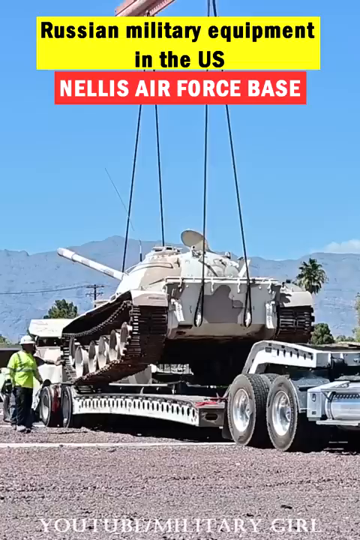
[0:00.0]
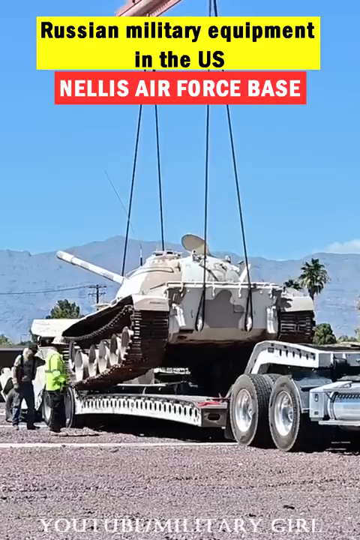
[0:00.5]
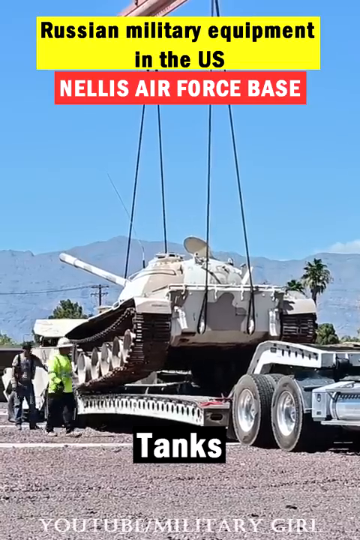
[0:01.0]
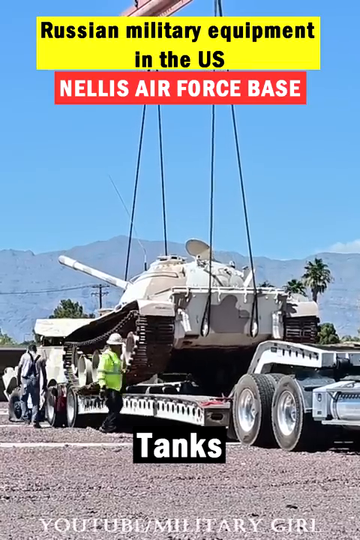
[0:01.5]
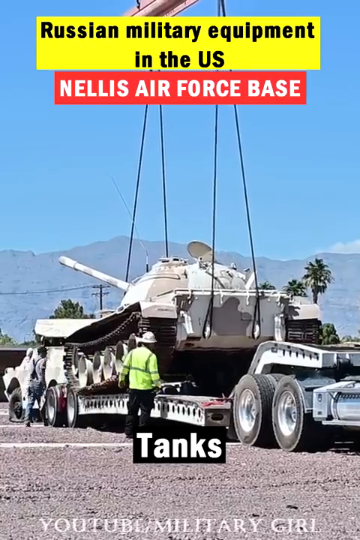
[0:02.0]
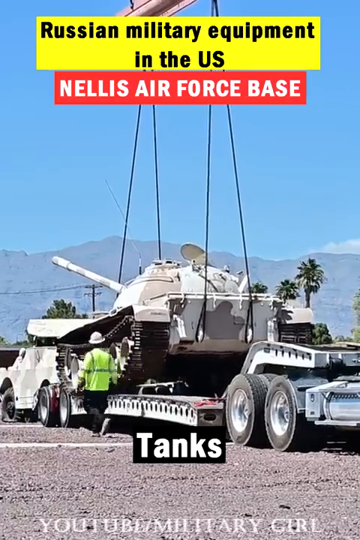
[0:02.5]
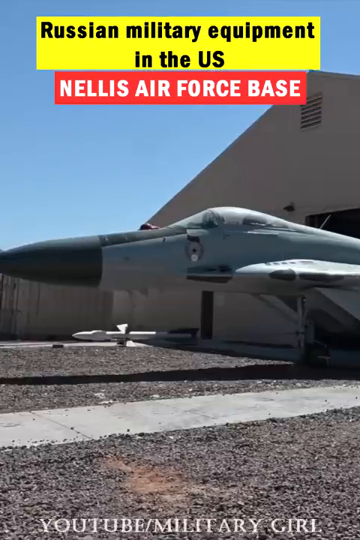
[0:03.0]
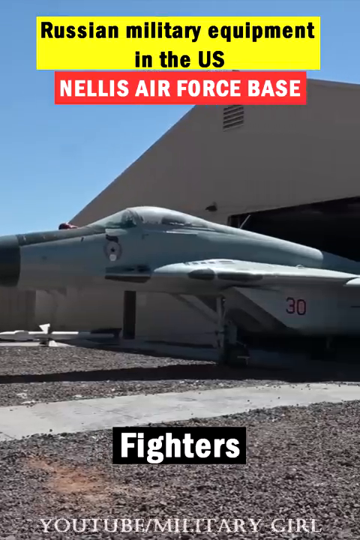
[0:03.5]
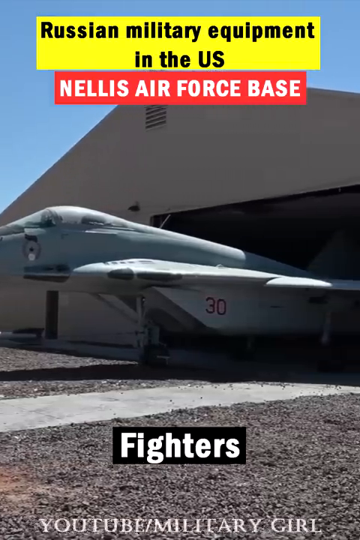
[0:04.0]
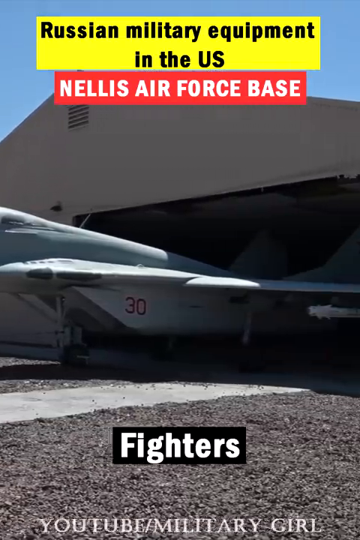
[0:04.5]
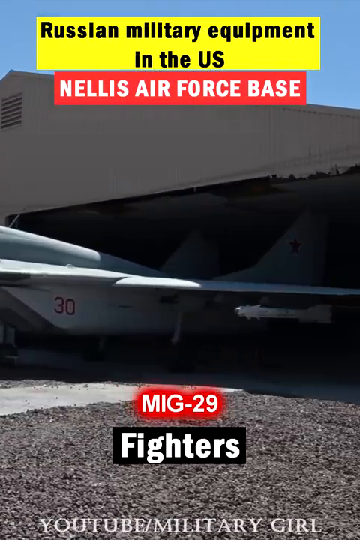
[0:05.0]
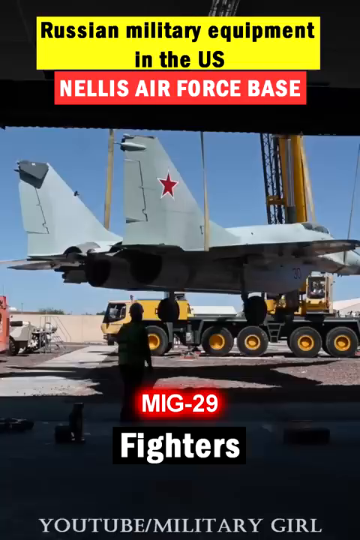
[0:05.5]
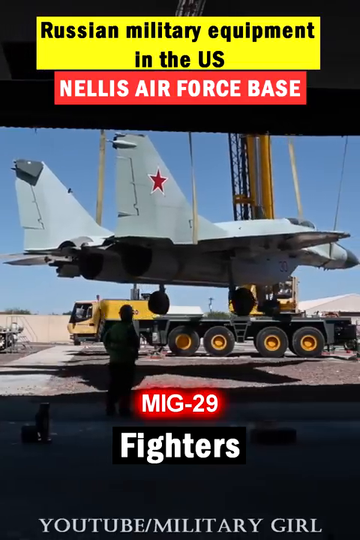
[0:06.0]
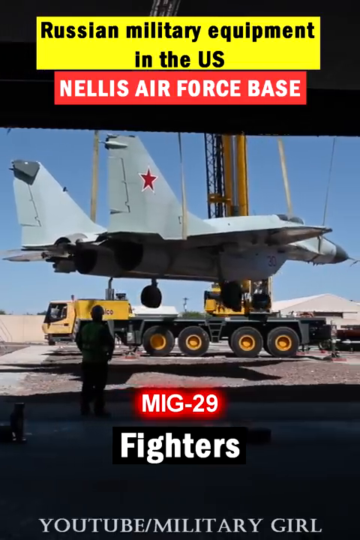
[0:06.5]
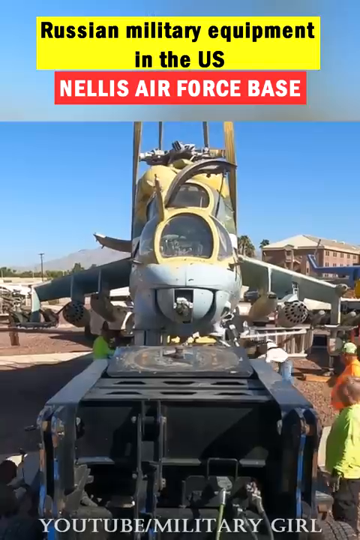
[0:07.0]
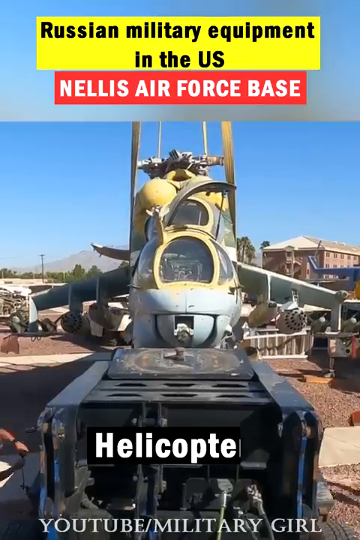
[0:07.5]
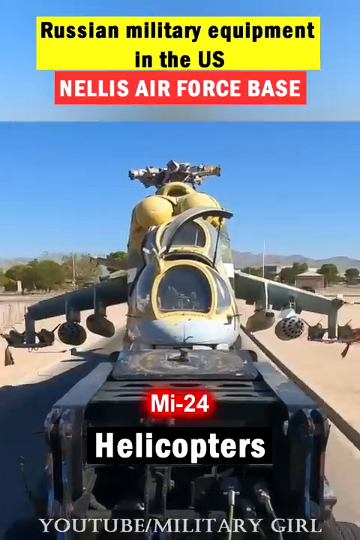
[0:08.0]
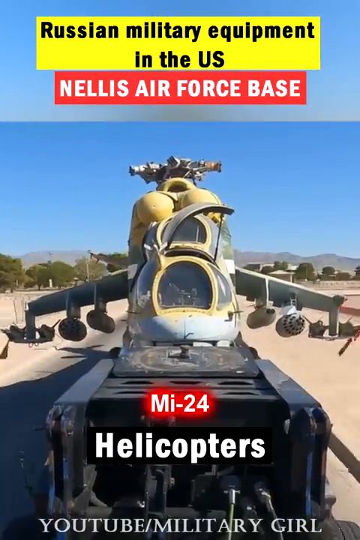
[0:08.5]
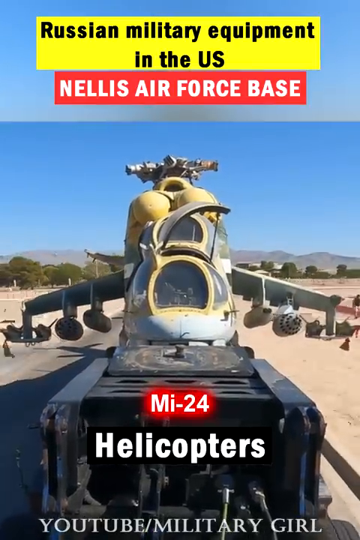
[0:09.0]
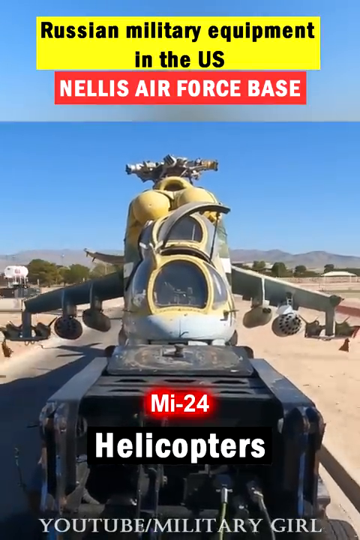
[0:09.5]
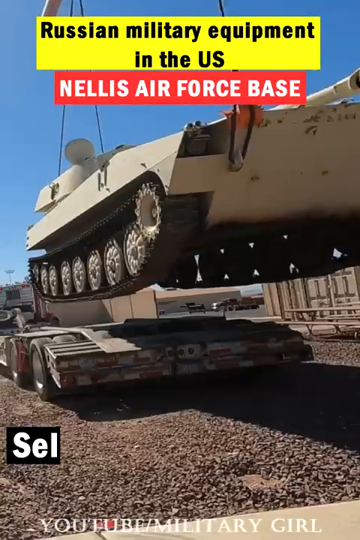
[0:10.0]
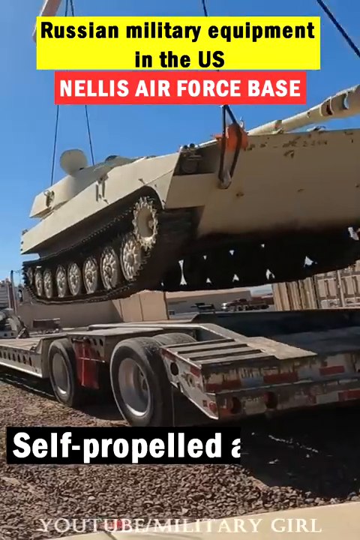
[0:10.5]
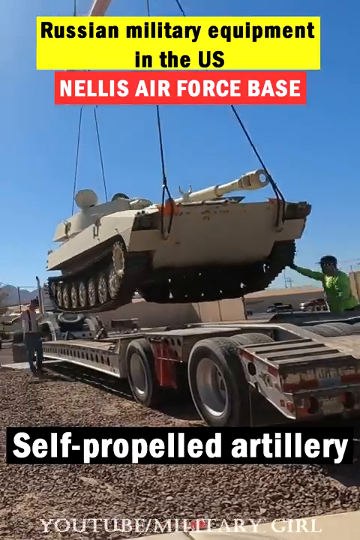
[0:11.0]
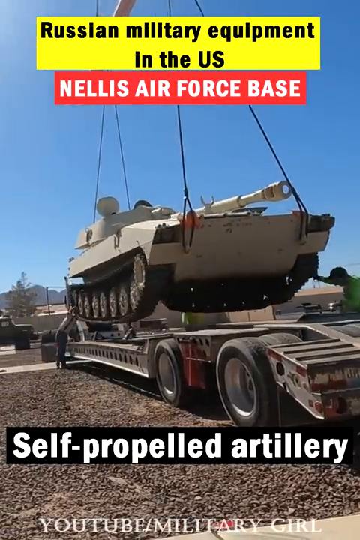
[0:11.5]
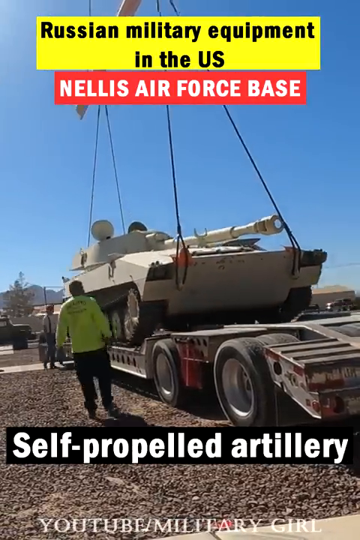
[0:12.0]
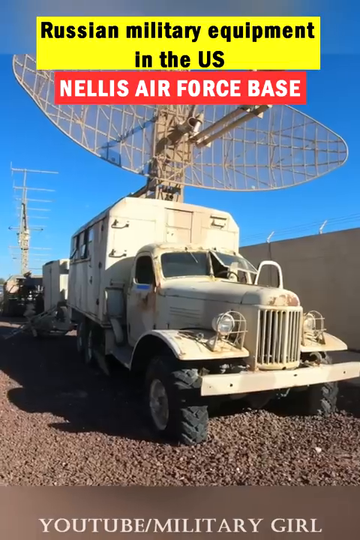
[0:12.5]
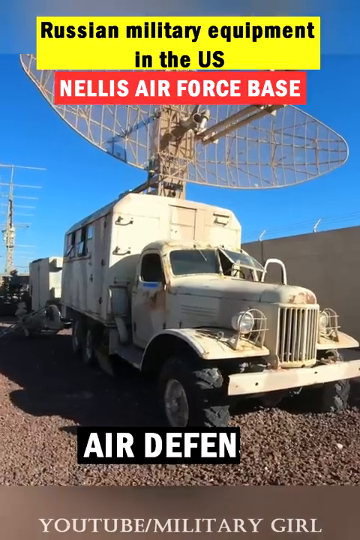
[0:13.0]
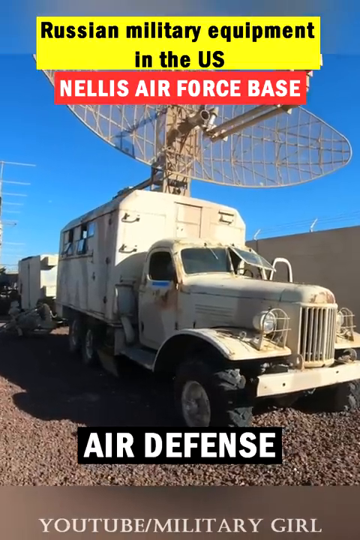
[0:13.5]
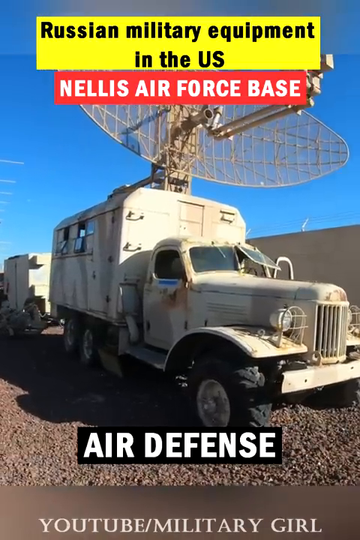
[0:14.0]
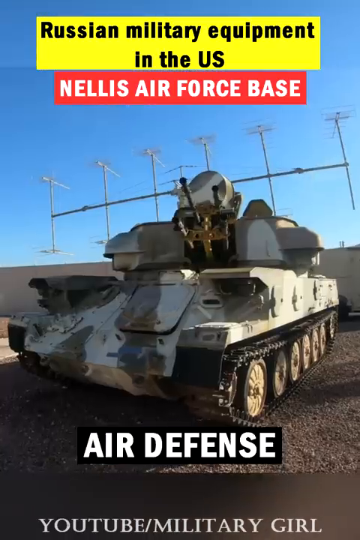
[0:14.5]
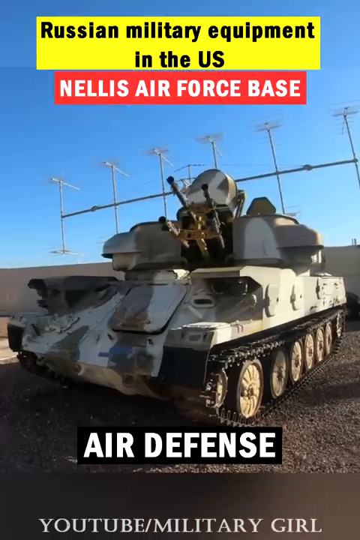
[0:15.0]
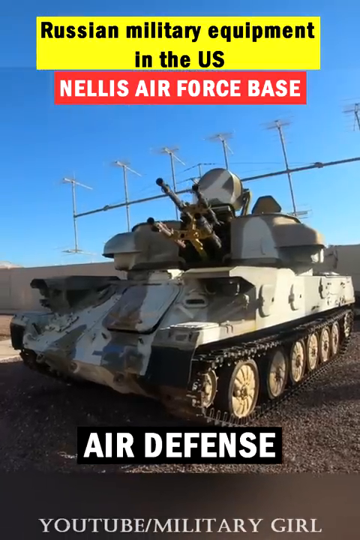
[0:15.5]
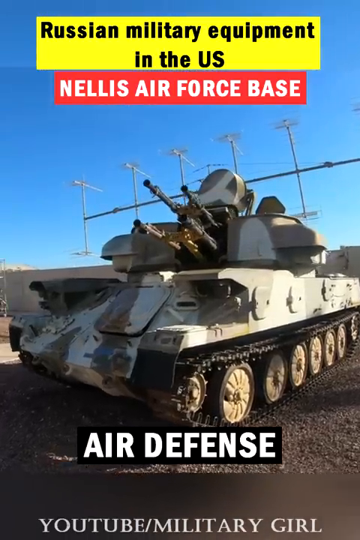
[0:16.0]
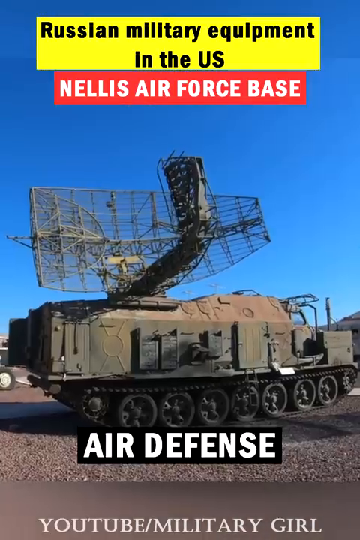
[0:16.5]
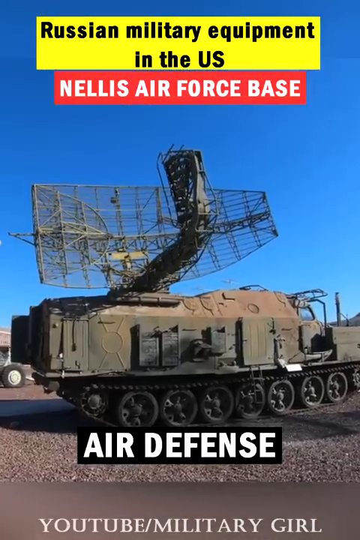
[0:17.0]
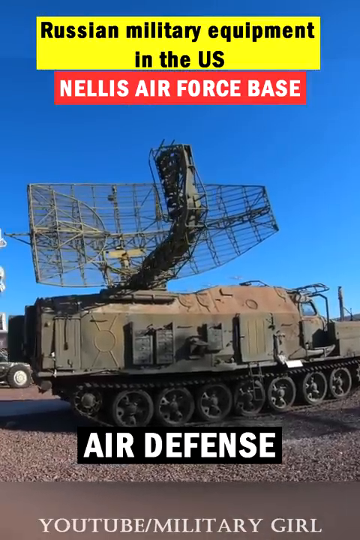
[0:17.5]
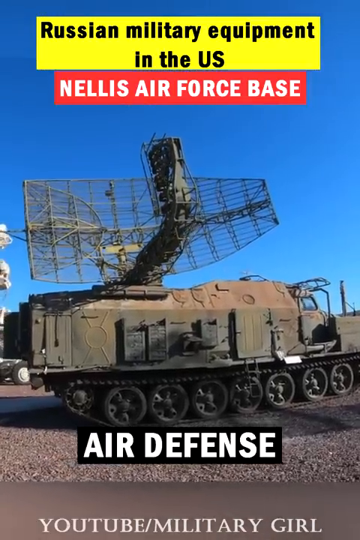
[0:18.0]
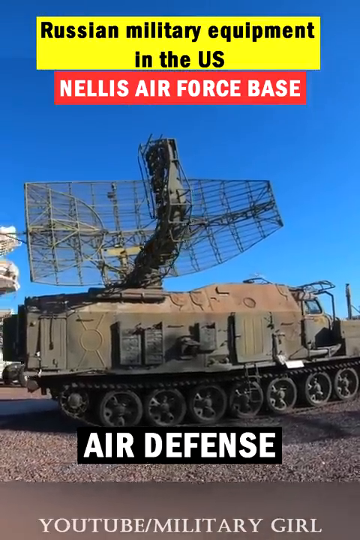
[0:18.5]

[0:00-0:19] A large military fighter plane appears, along with what looks like a large military tank. Fighter planes are at the Nellis Air Force Base. Text on screen reads "Russian military equipment in the U.S. Air defense, tanks, fighters, MiG-29, Mi-24 helicopters, self-propelled artillery, air defense". Tanks have large guns that protrude from the bottom. Equipment is being loaded onto wheels, apparently so it can be moved to another area and shipped out. Workers are visible in the cranes that are used to lift the equipment. There are hangars where the planes have been housed, and the equipment appears to have come from a hangar and to be leaving.